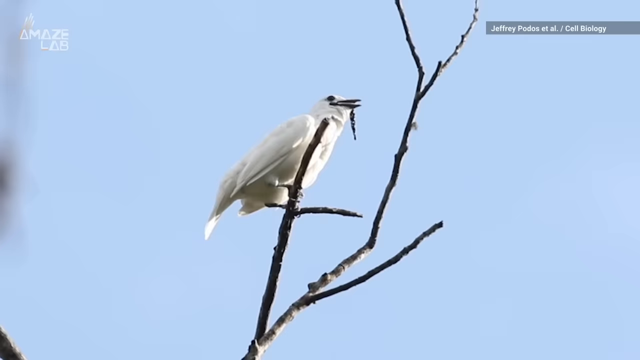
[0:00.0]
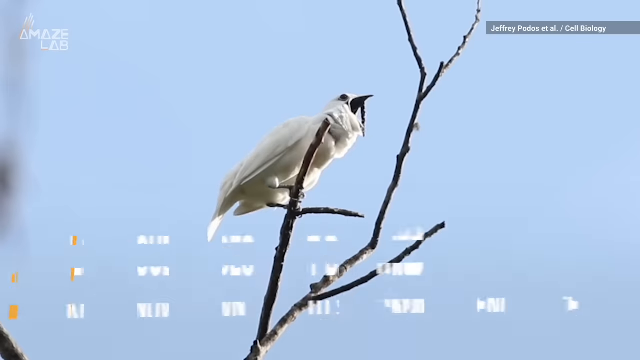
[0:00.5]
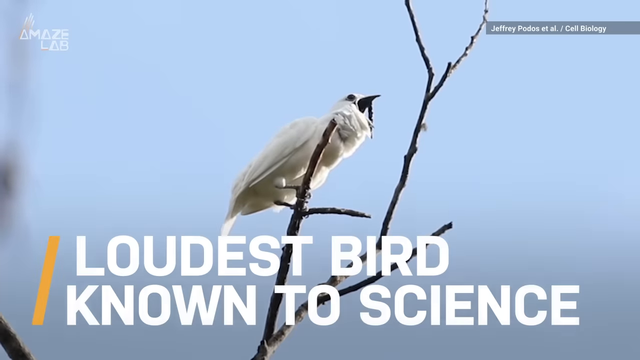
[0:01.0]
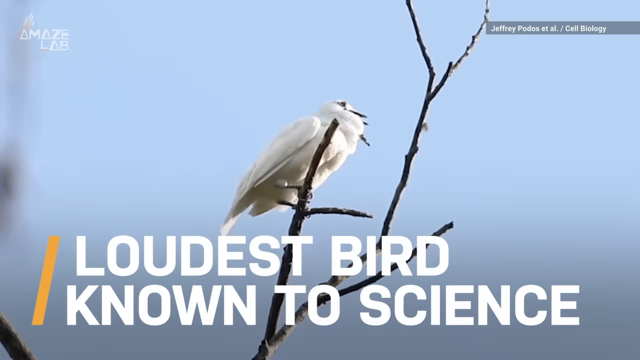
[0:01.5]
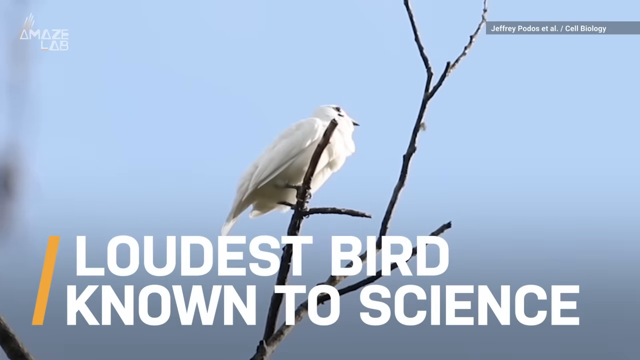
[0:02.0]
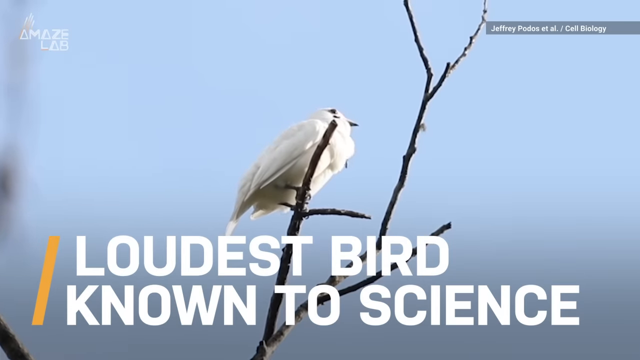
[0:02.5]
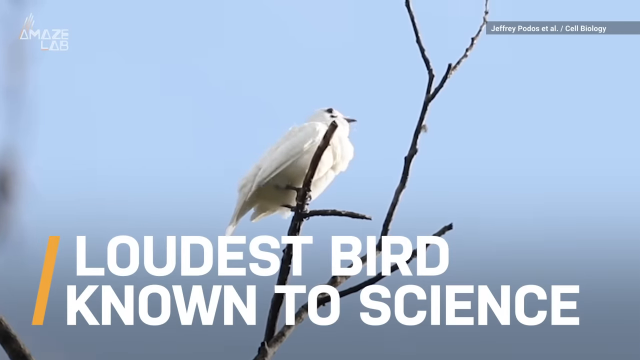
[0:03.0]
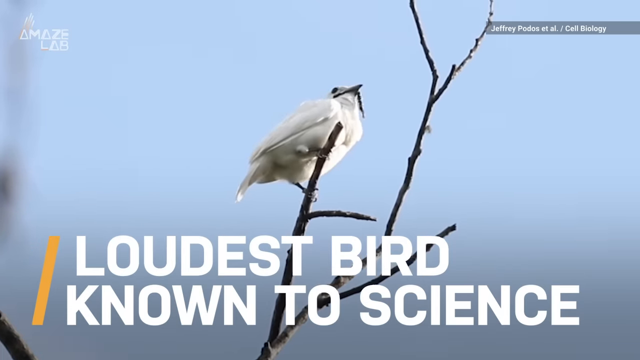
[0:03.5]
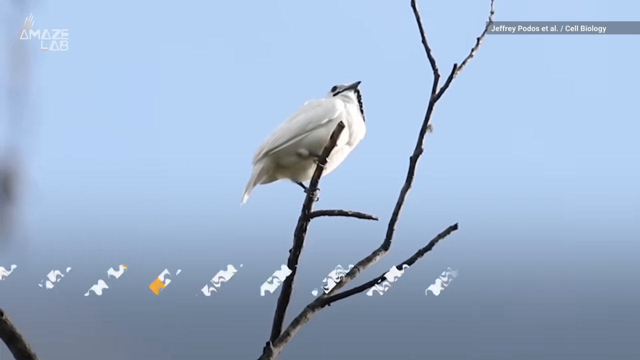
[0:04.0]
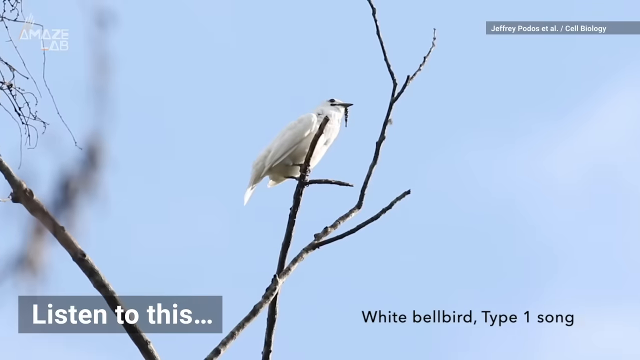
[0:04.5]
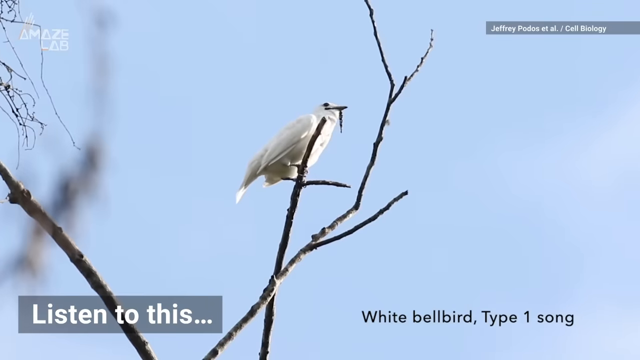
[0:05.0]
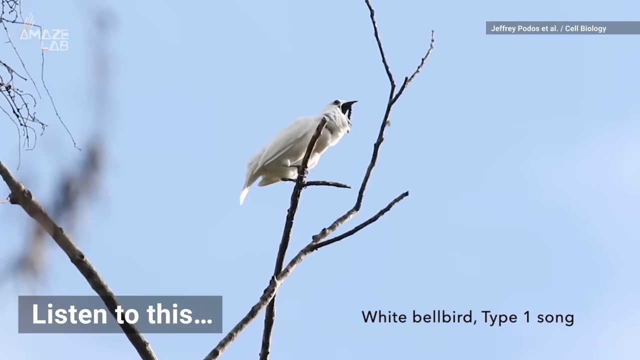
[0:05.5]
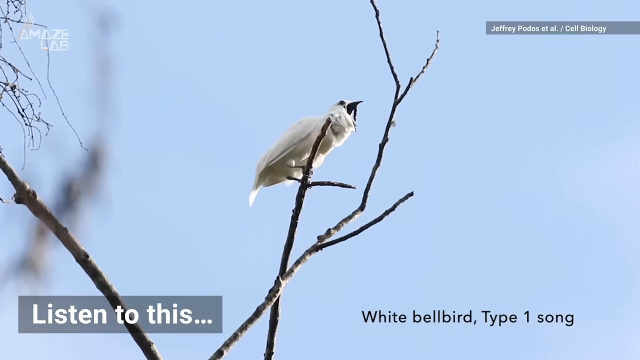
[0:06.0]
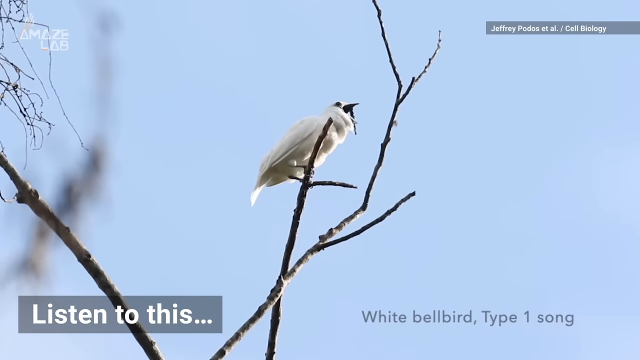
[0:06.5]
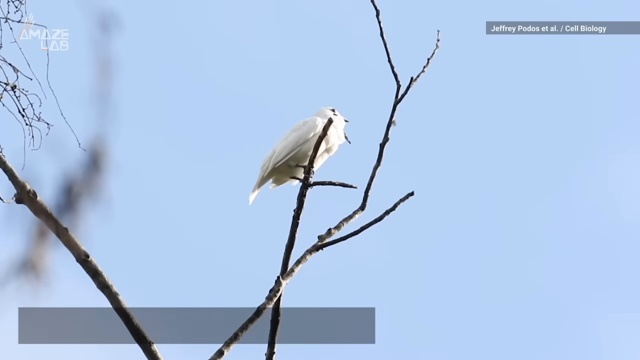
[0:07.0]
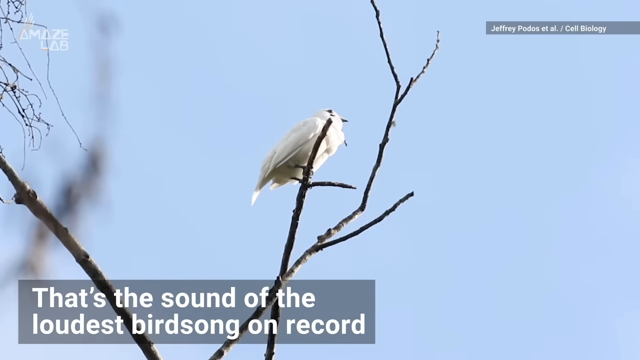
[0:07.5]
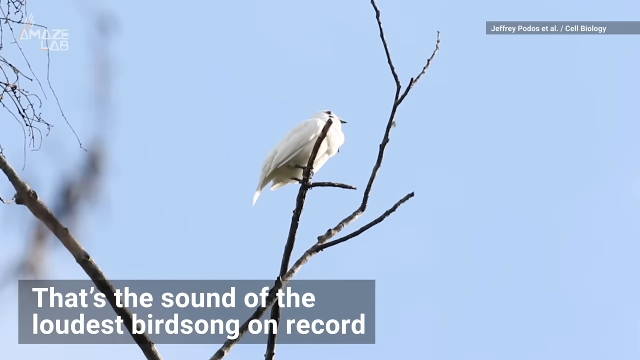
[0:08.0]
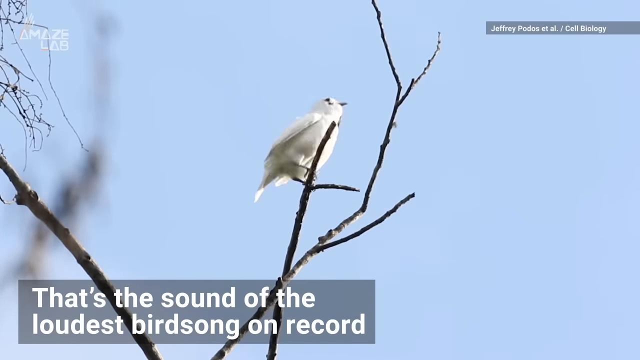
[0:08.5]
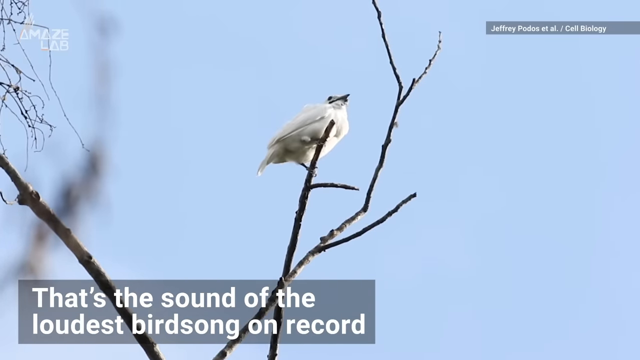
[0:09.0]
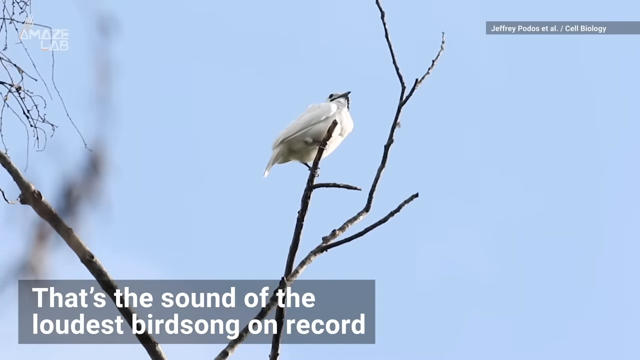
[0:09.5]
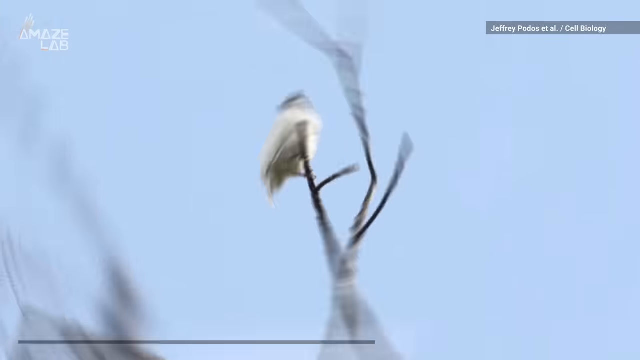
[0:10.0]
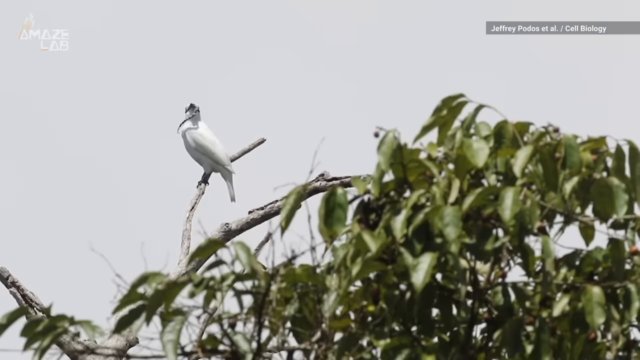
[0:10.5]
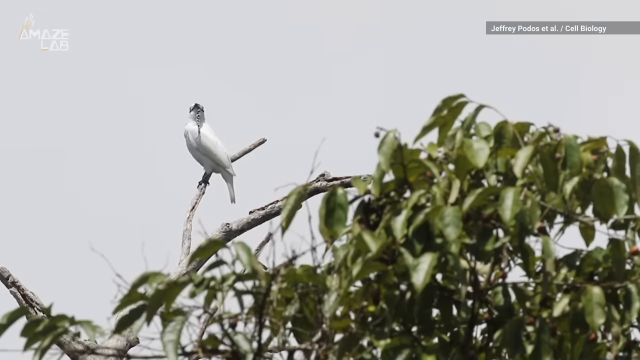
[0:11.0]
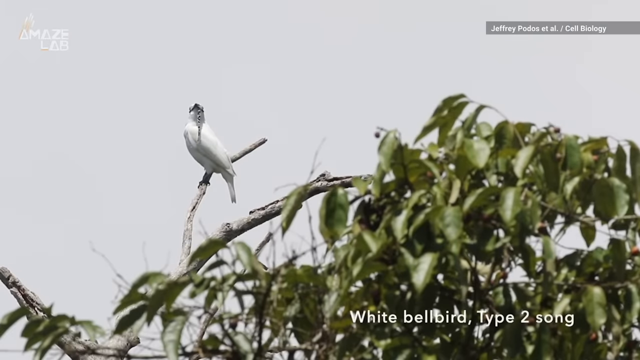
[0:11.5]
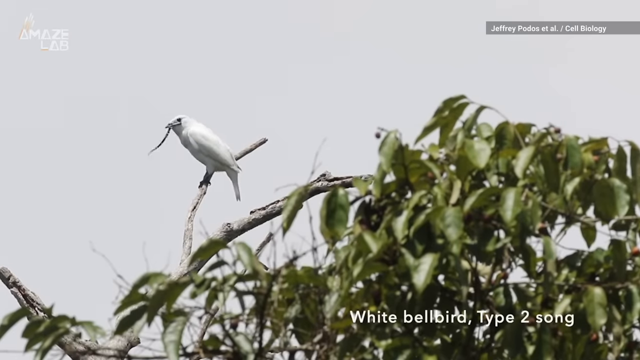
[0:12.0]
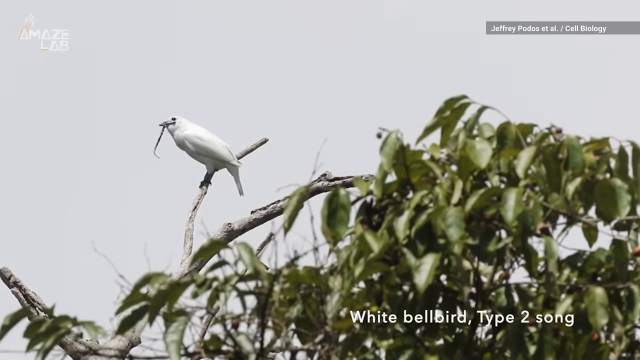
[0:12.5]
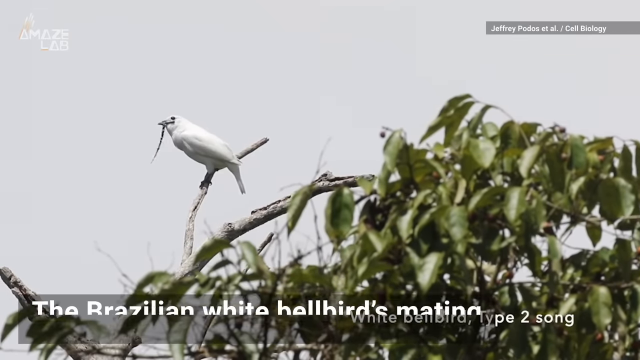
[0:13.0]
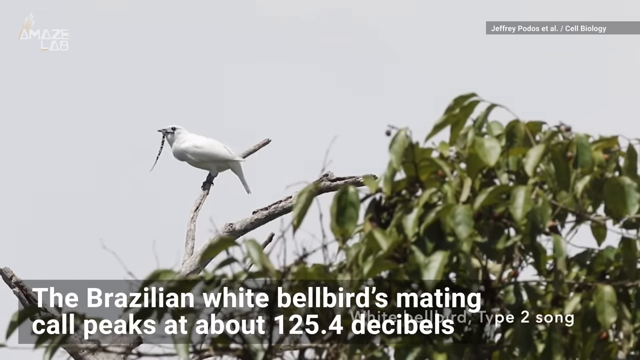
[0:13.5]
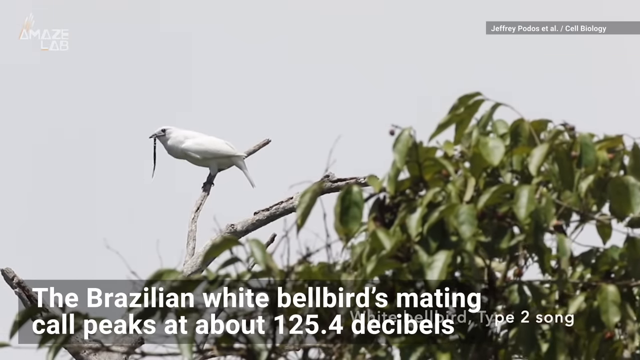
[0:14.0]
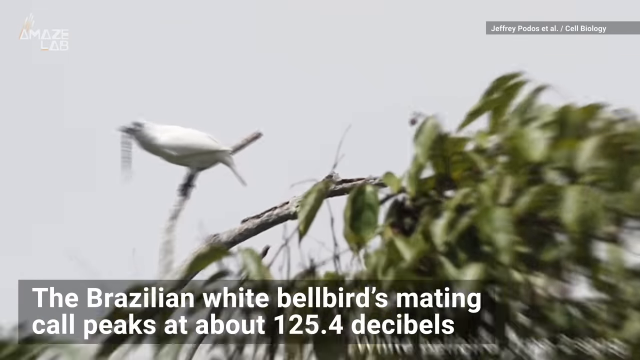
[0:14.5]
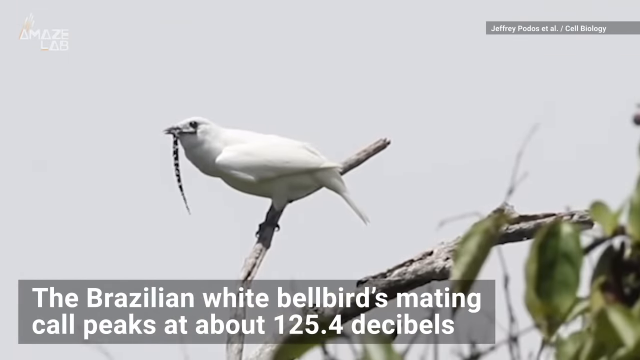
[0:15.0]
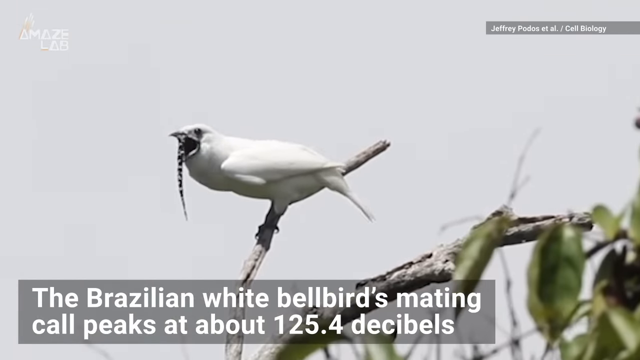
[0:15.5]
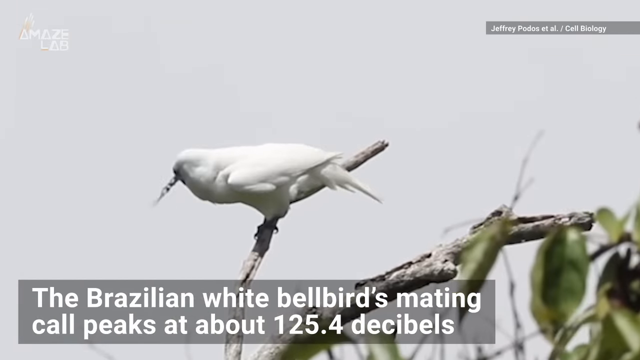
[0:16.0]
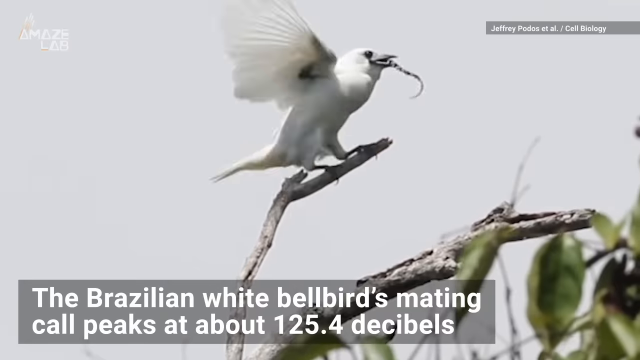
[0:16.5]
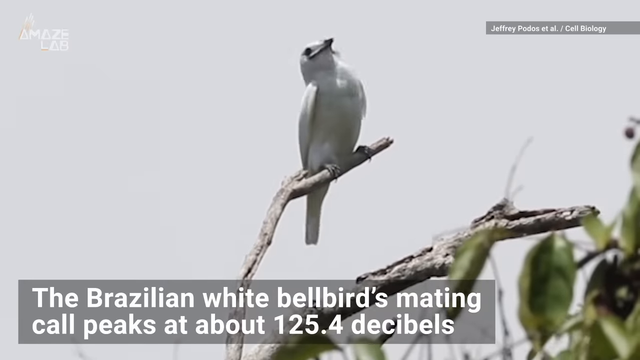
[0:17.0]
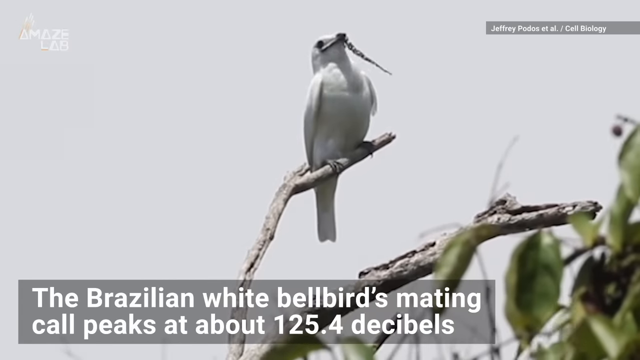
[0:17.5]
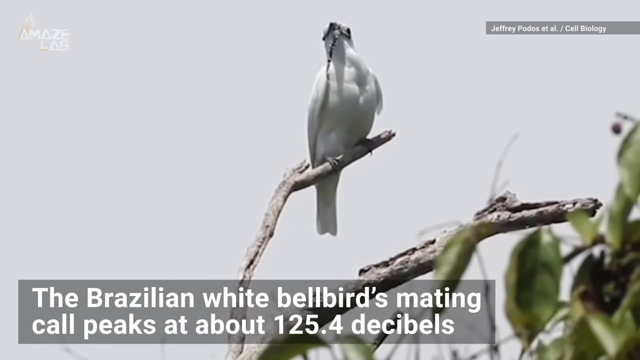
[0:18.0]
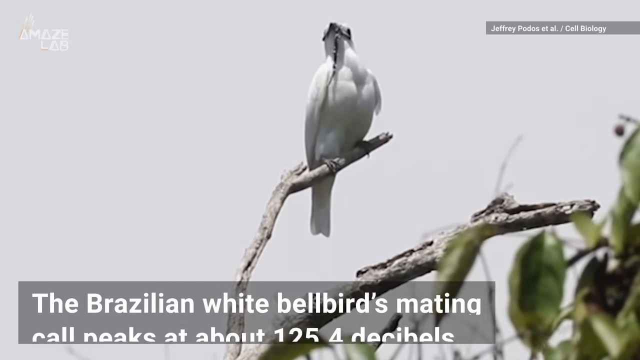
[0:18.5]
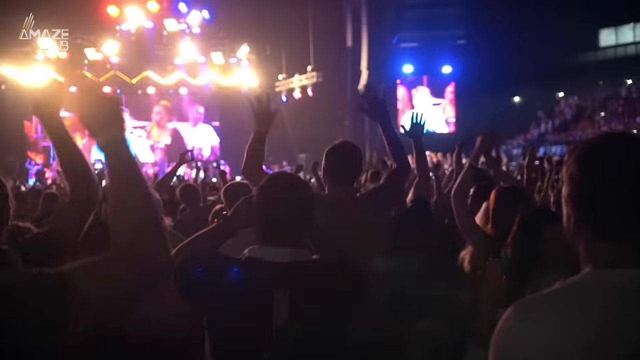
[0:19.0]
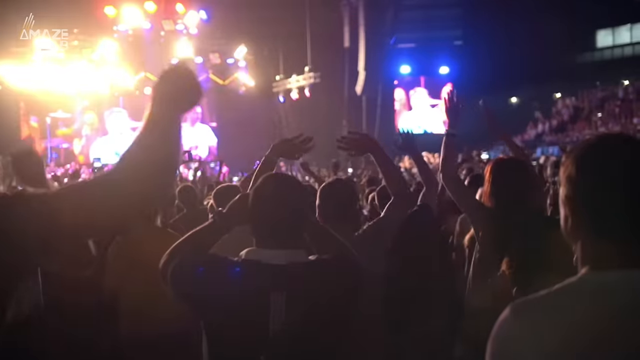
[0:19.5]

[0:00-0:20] A bird is on some branches of a tree. The branches are very empty, thin and brown. The bird appears very soft looking and has a lot of white to it: its wings, belly and chest are all white, while its beak and eyes are very black. The background is blue sky. Text appears at the bottom in very white bold lettering, reading "loudest bird known to science." The bird stays in view, just moving around a little. At the bottom left, text reads "listen to this," followed by "that's the sound of the loudest bird on record." The scene changes to the same bird in a different tree, looking to the left and standing on another branch. This tree is fuller, with a lot of green leaves. At the bottom right, text reads "white bell bird type two song." The text at the bottom changes to "the Brazilian white bell bird's mating call," with a figure of about 125.4 decibels. Then there is a close-up shot of the bird, presumably making that loud mating call.